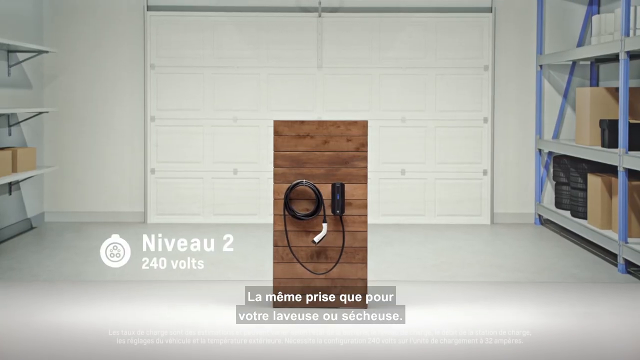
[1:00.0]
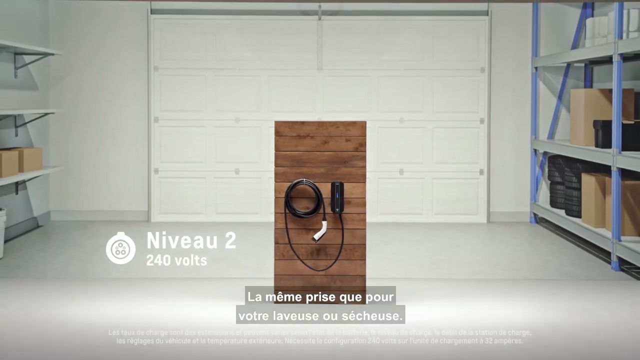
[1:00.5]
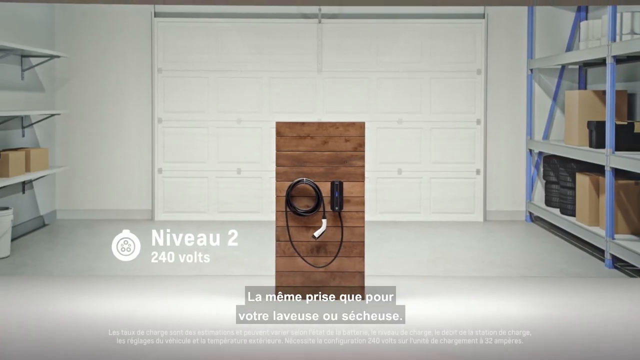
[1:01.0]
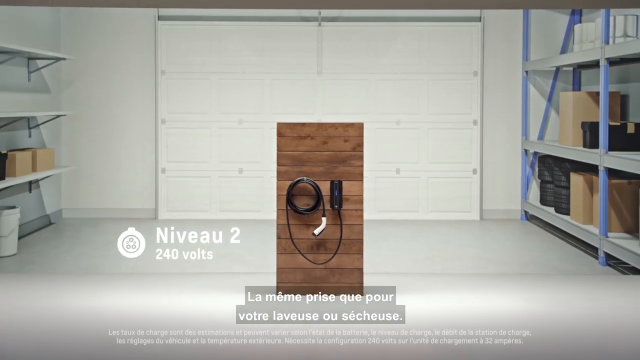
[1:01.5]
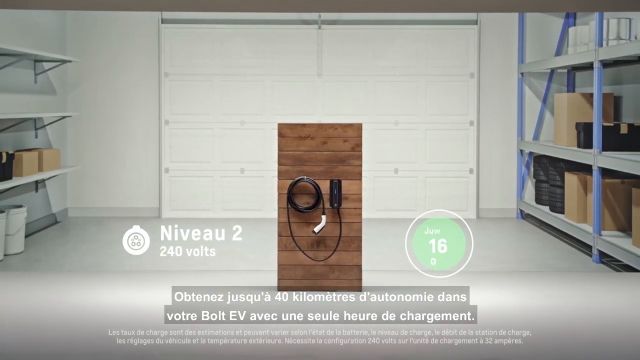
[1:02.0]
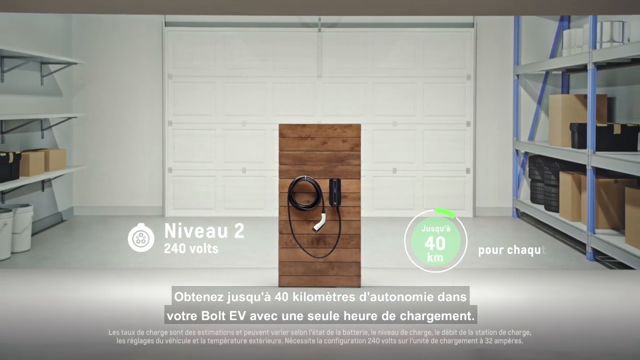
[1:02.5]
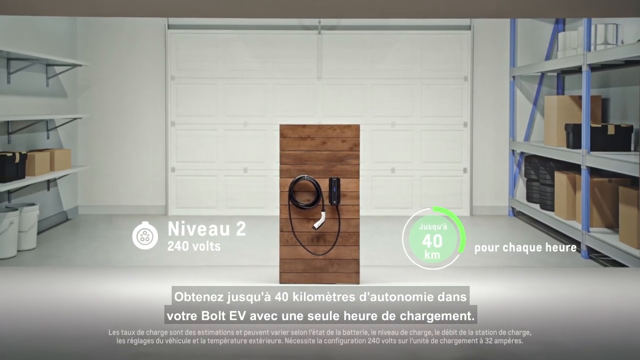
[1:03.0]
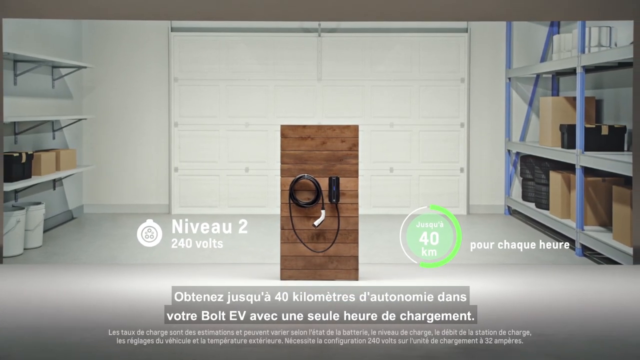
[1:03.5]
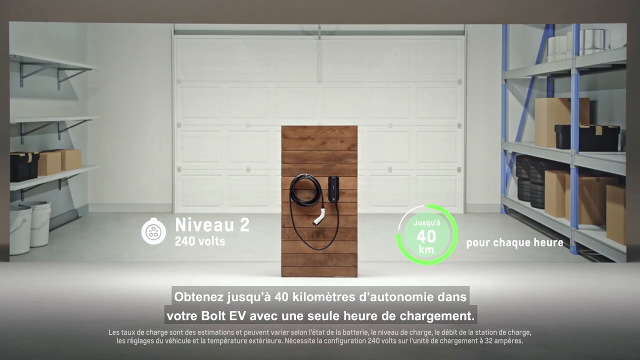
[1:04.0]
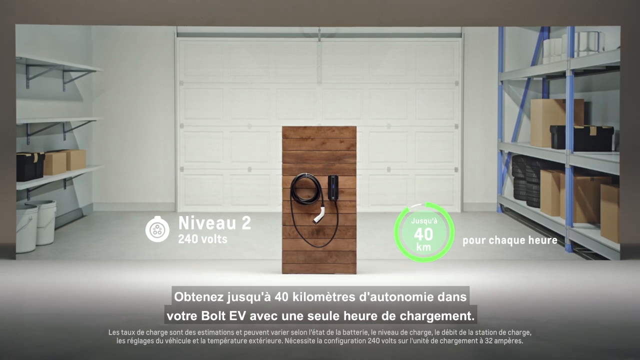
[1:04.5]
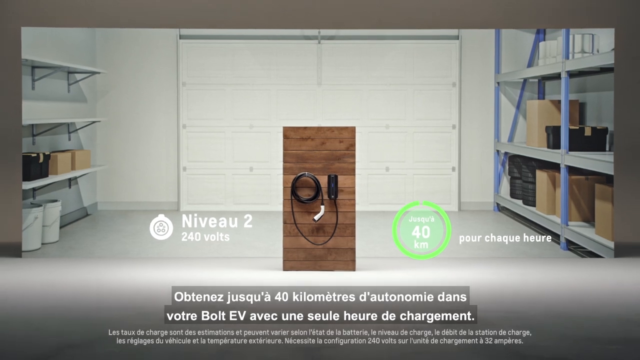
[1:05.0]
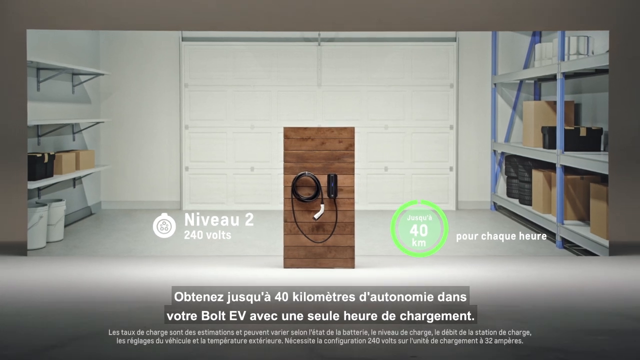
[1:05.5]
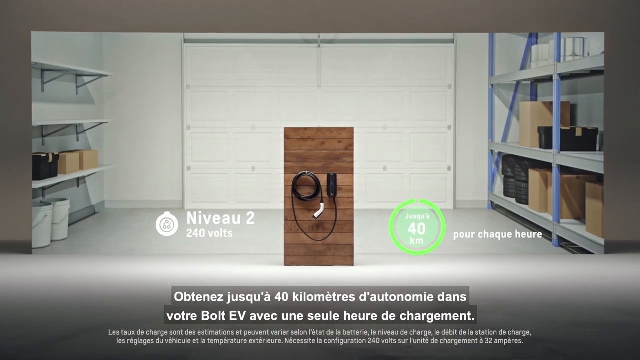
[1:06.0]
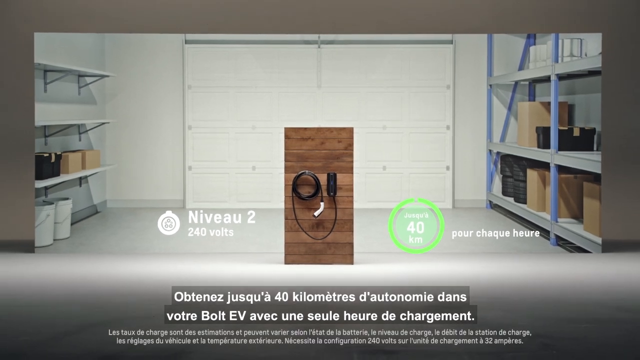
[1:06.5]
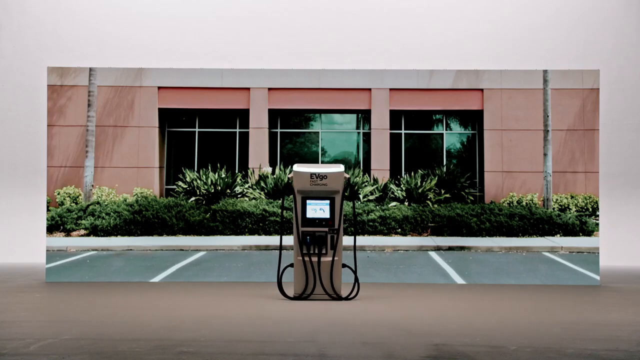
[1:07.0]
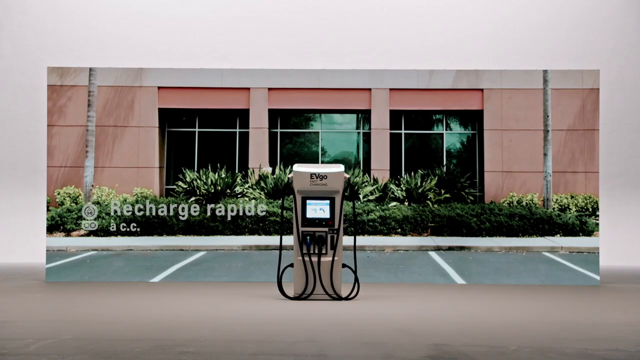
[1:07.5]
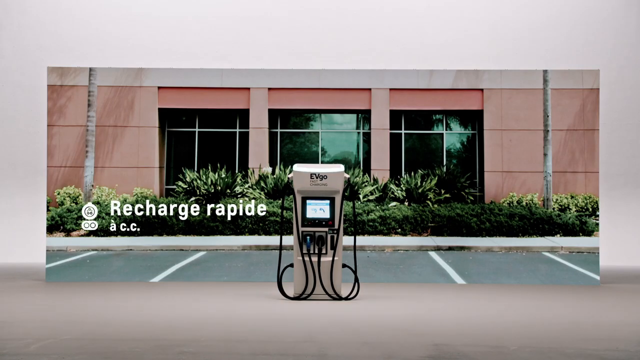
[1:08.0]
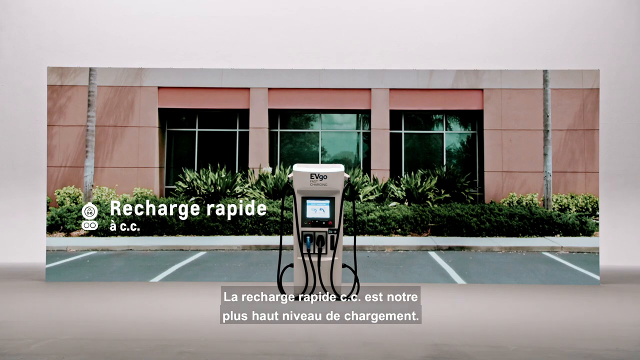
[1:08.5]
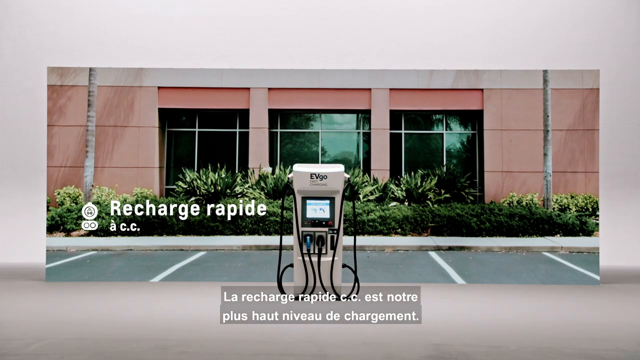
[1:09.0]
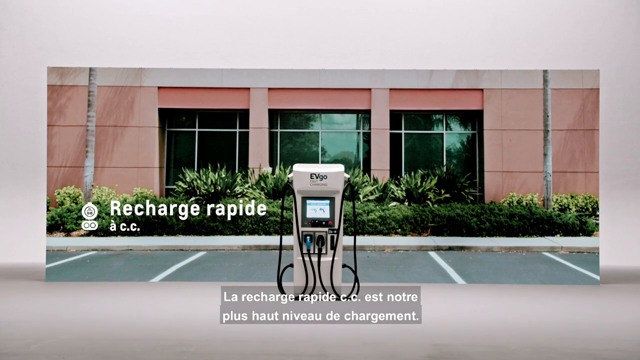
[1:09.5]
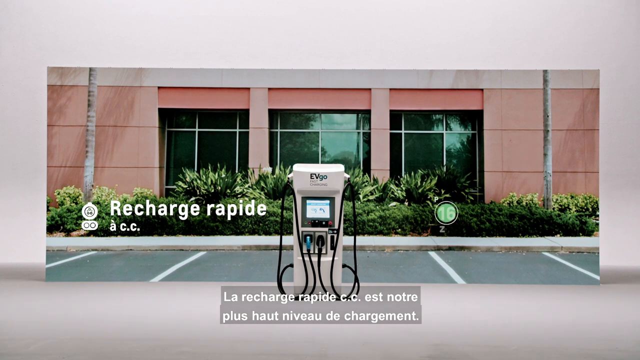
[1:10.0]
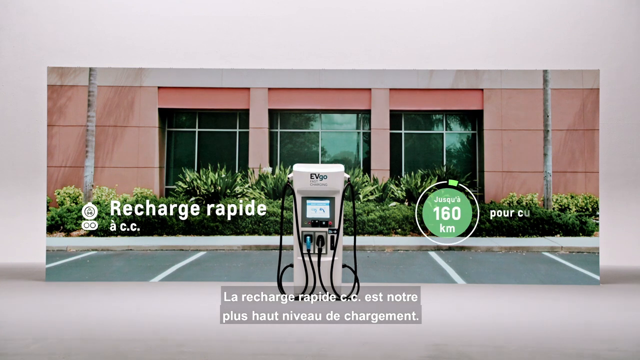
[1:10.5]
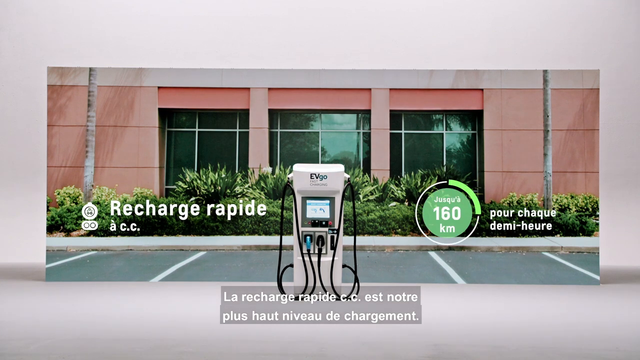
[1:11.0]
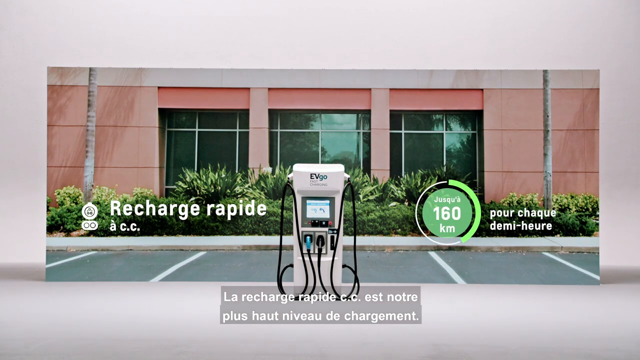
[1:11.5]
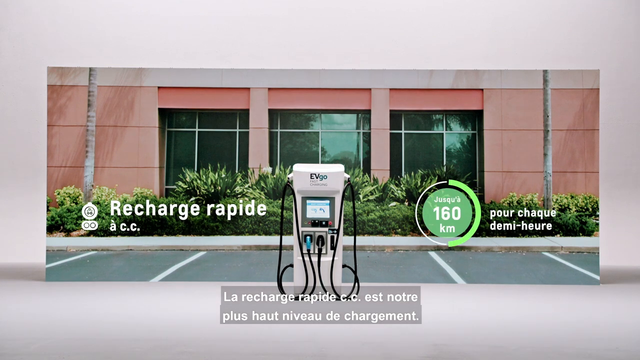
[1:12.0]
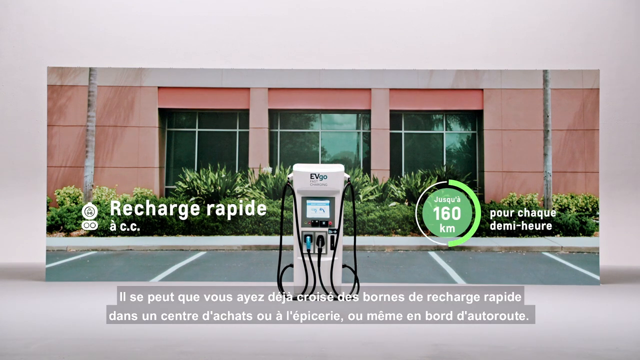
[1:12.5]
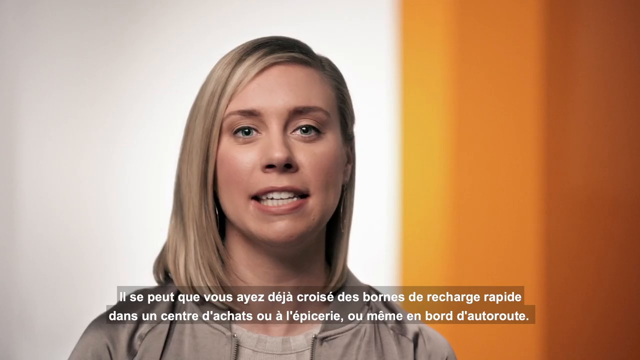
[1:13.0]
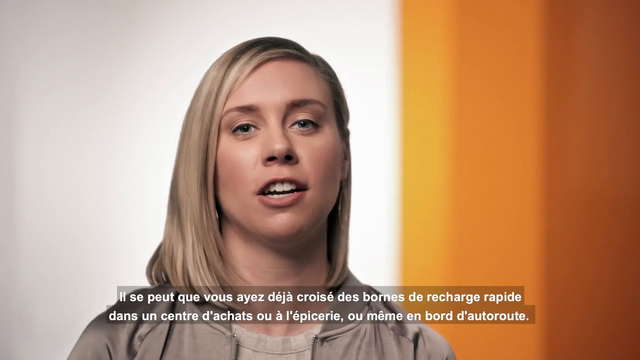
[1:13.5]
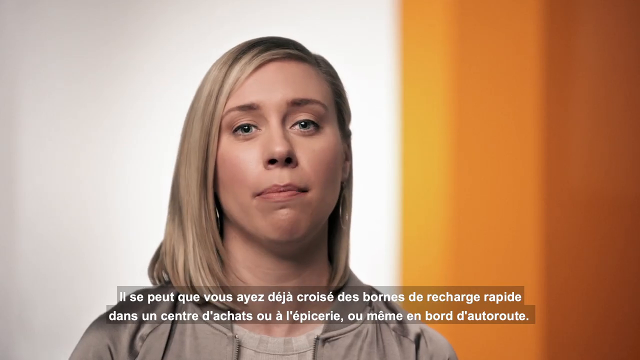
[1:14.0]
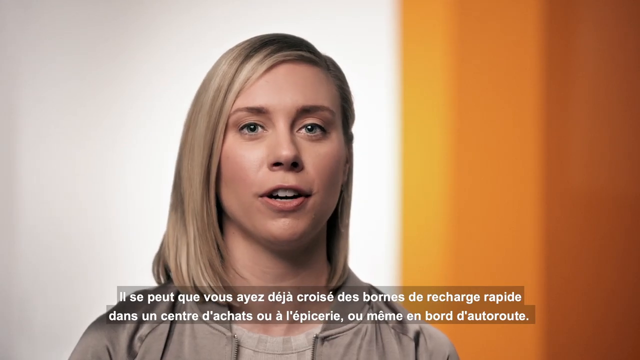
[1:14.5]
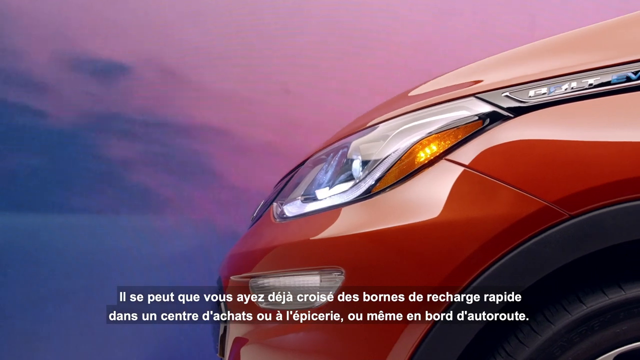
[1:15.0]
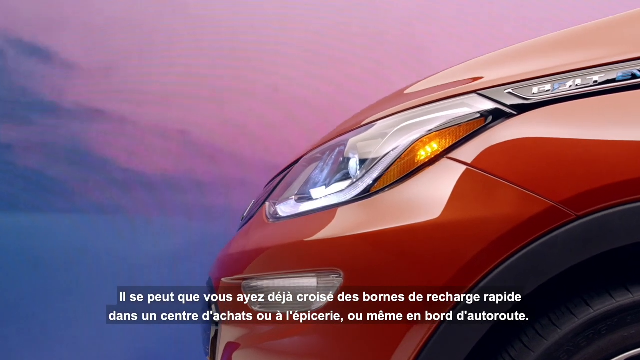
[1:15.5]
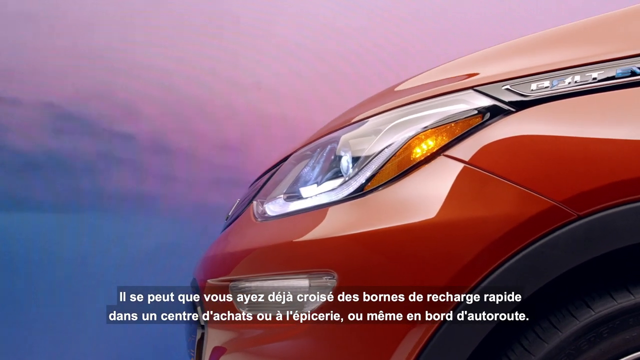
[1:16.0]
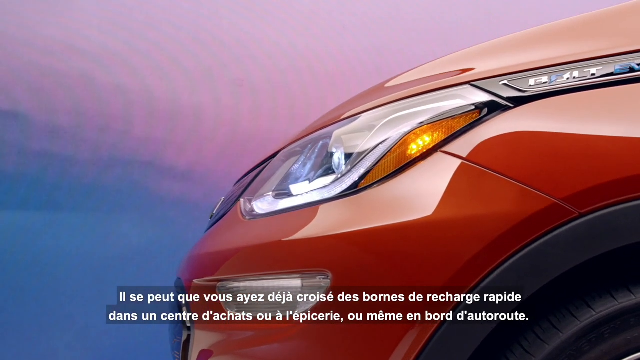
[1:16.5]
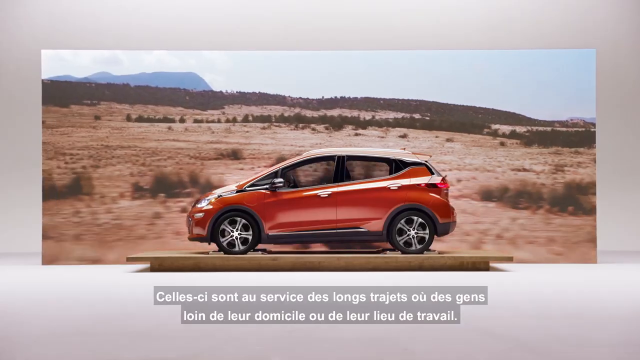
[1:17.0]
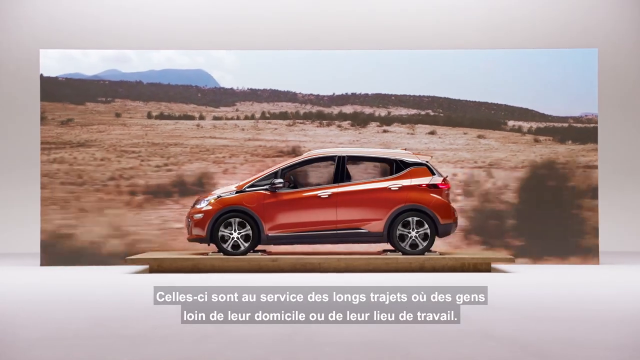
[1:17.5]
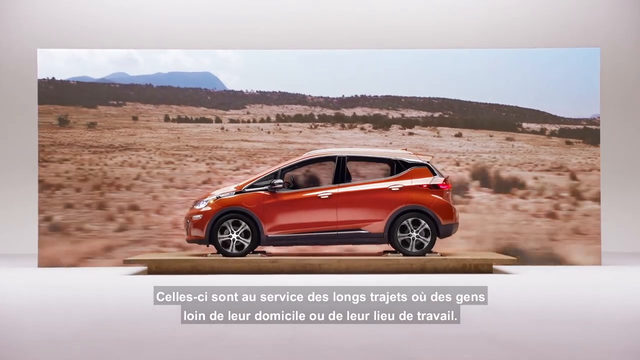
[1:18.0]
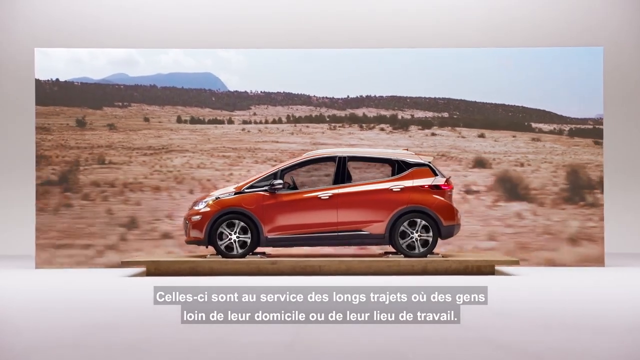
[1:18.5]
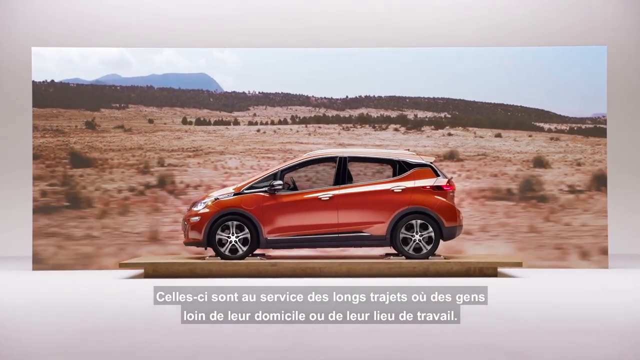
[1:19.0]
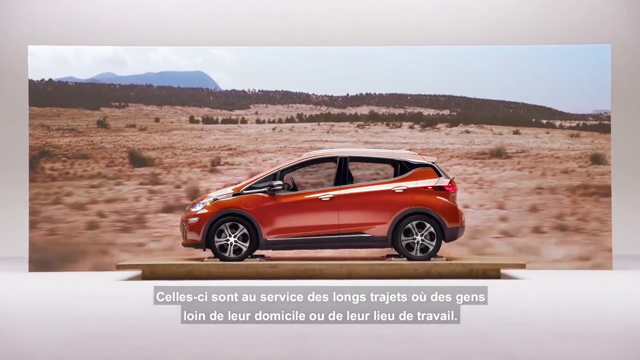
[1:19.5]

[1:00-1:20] The advertisement for electric vehicles, and the Volt in particular, shows the inside of a homeowner's garage, with empty shelves on the left and shelves holding boxes and tires on the right. In the middle is a picture of a charging system with the text "new Volt 2, 240 volts", followed by "40 k per hour charge". Next is the Rapid Recharge, outside a business, with the business's three windows, palm trees, bushes and parking in the background. This charging system is more complex, with several charging ports, and looks just like a gas pump but for EV; it shows "160 km per hour charge". A blonde woman in her low 20s then comes on, talking to the camera and explaining something. Footage follows of the front of a red Volt, and then of the Volt on a platform with ball bearing spinners underneath so both the front and rear wheels can move. It looks as if it is driving down the street, but the background is a screen showing a desert scene with brown dirt and green trees, and it is really in a studio.